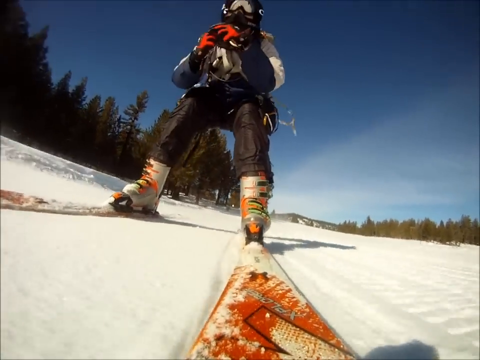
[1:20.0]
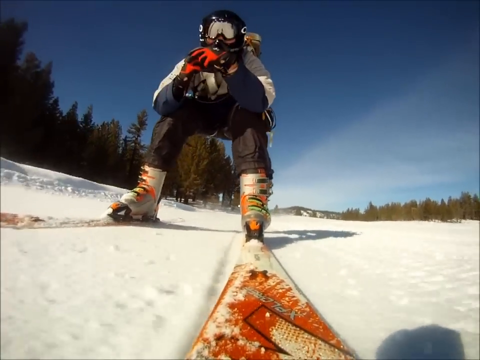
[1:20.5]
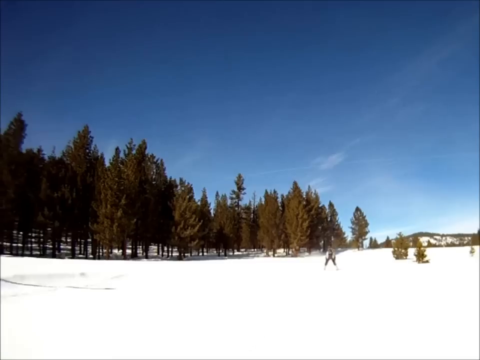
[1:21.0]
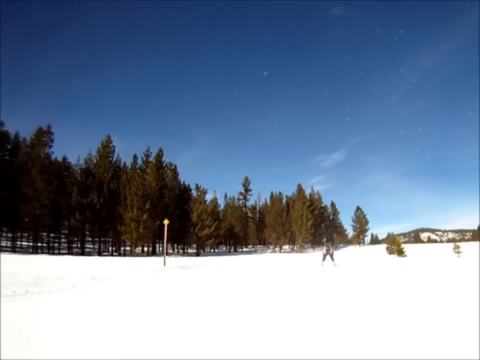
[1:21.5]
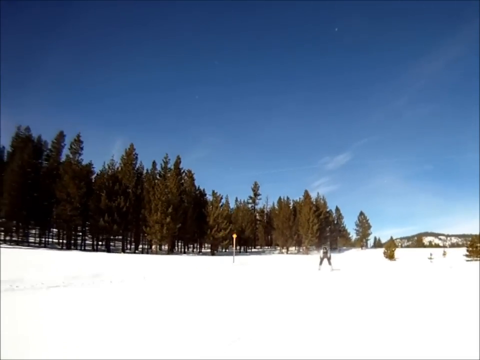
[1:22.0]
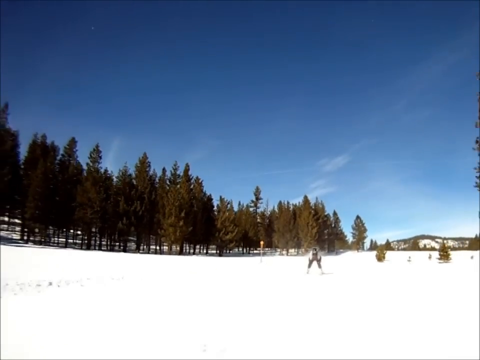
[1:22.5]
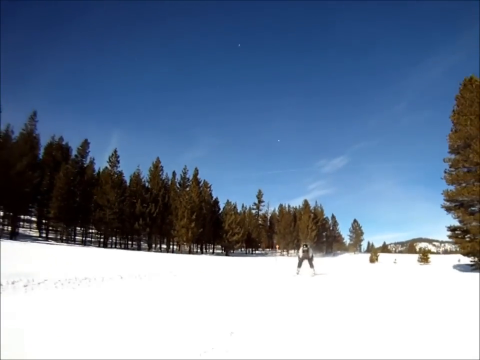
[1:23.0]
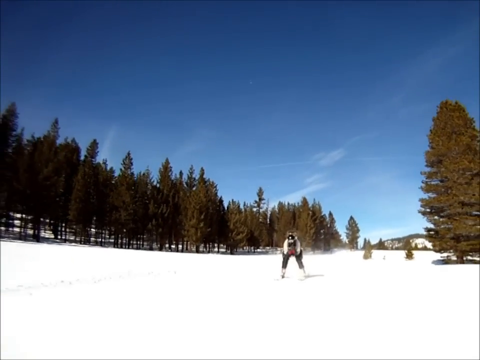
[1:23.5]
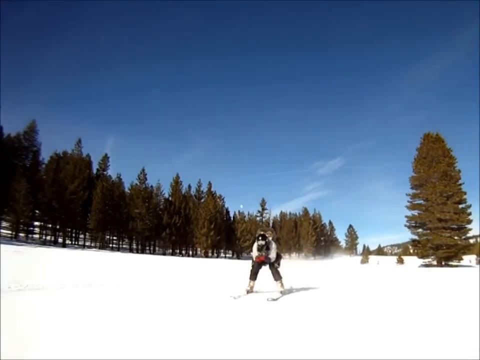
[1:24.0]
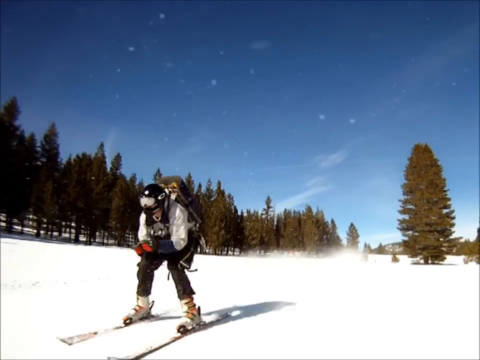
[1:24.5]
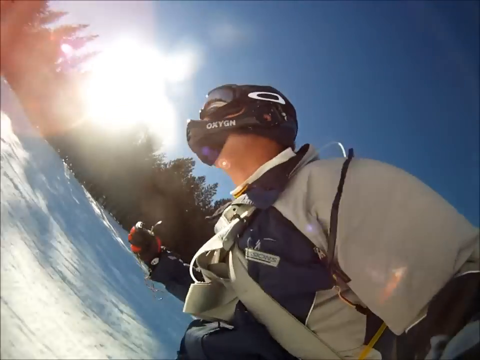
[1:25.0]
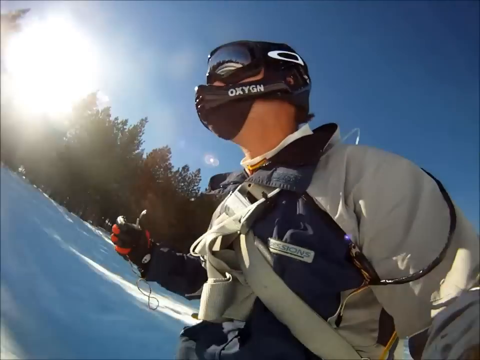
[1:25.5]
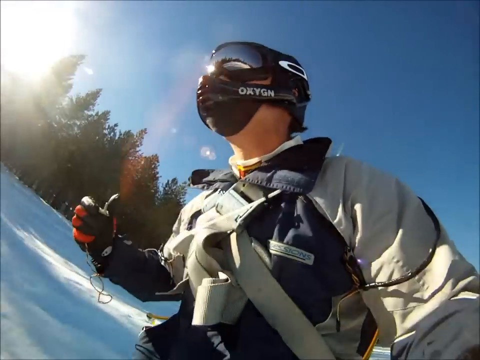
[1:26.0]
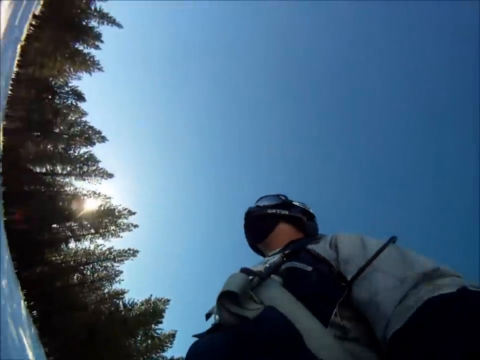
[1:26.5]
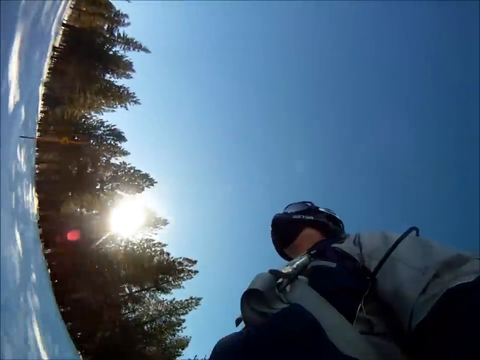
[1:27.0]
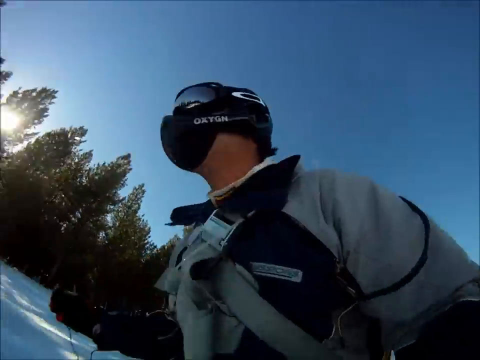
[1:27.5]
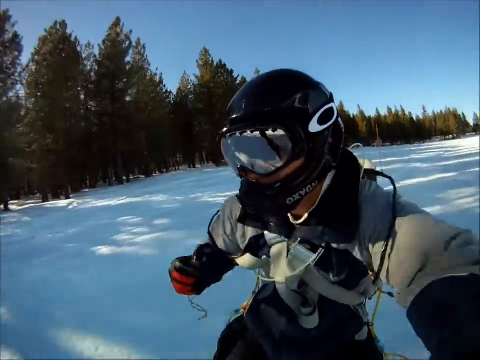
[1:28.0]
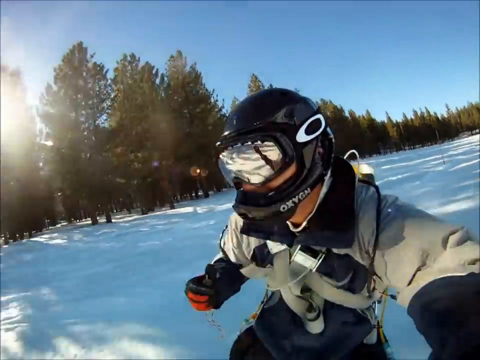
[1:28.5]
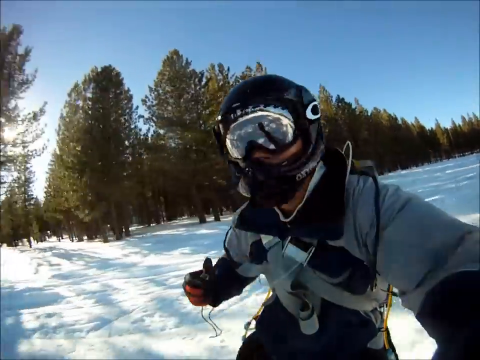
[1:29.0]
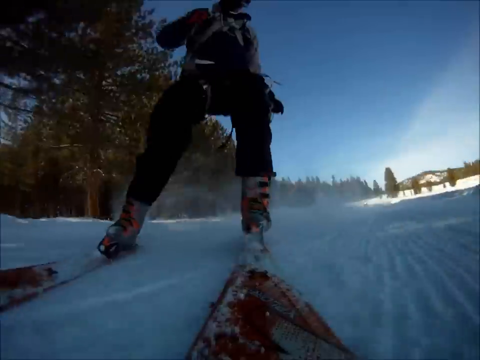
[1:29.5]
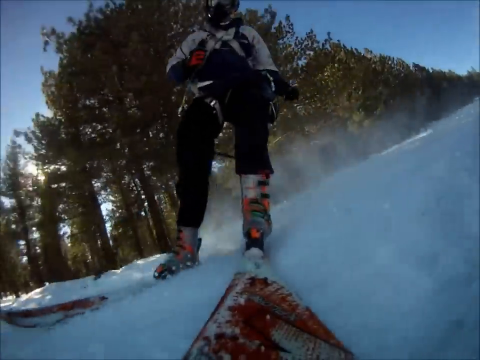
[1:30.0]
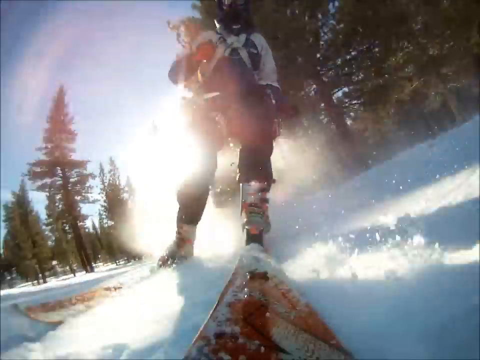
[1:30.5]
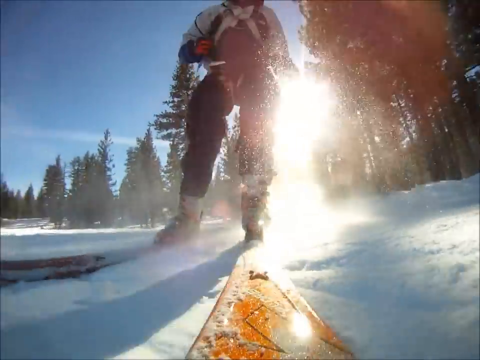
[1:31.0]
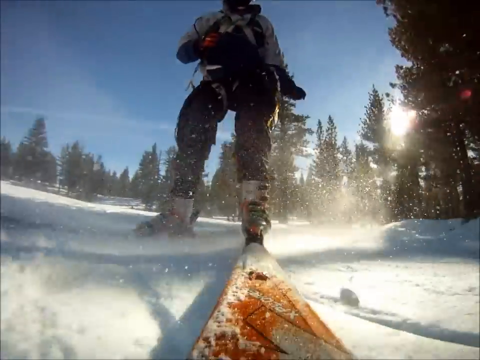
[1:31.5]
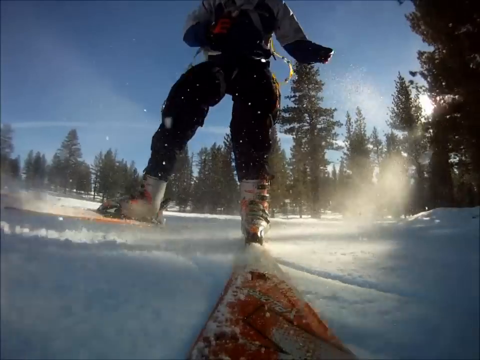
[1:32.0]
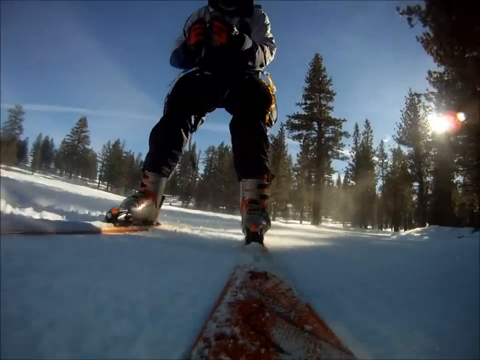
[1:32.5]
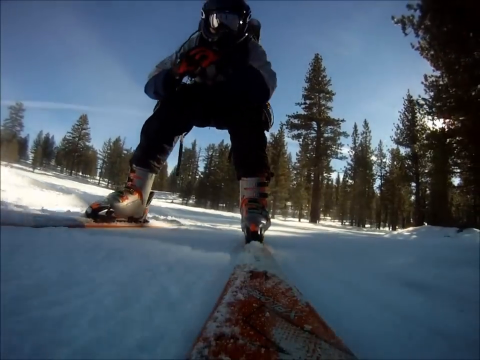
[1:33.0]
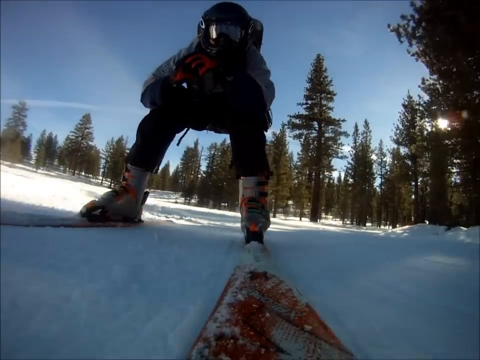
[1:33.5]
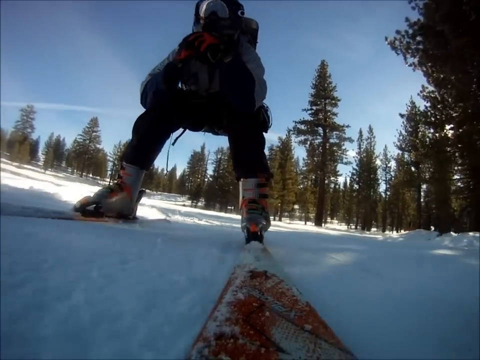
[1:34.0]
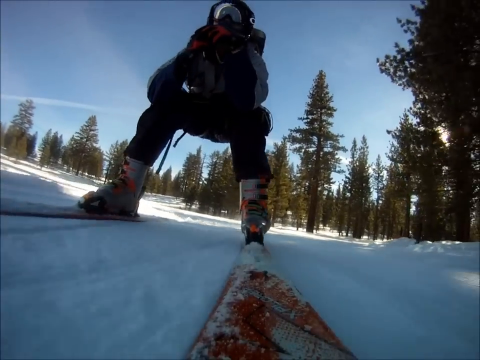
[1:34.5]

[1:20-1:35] Forest is visible on either side, but he is out in the open, crouched way over, and zooms by. A shot follows, possibly from a GoPro in his left hand, then the view shifts to what may be the tip of the ski. The footage appears to be edited together from a camera held in his left hand, a camera on his left ski, and occasional shots from someone presumably standing on the sidelines. The shot from his left hand looks spatially distorted, with the horizon curving upward, apparently a lens artifact.